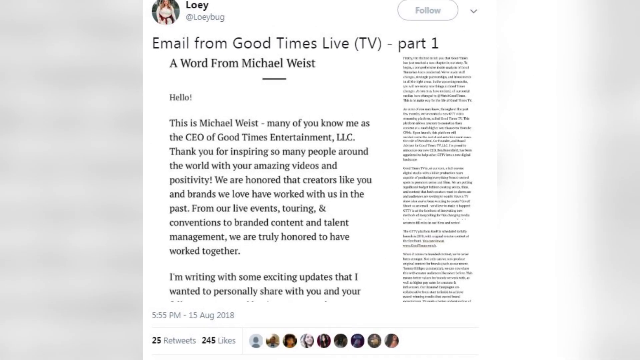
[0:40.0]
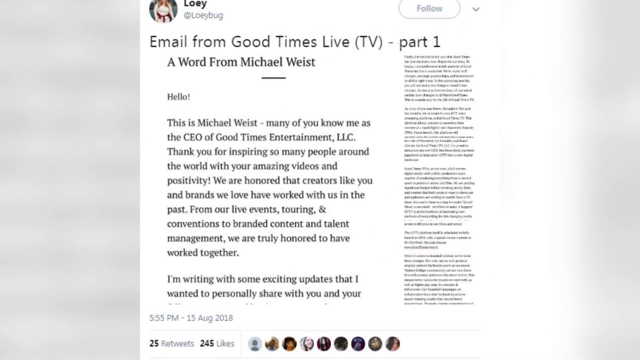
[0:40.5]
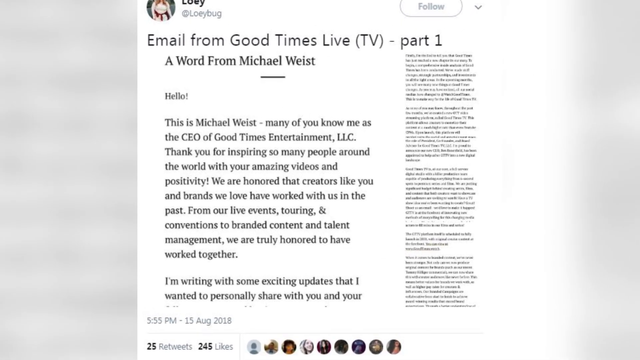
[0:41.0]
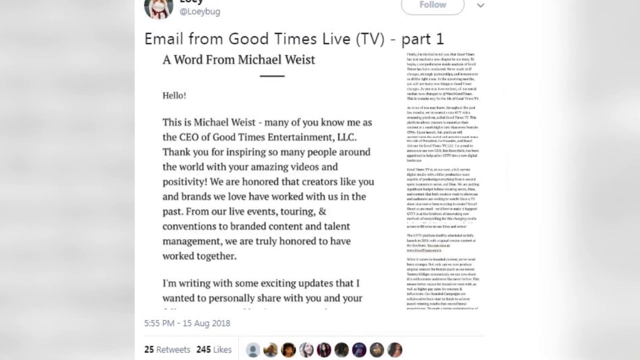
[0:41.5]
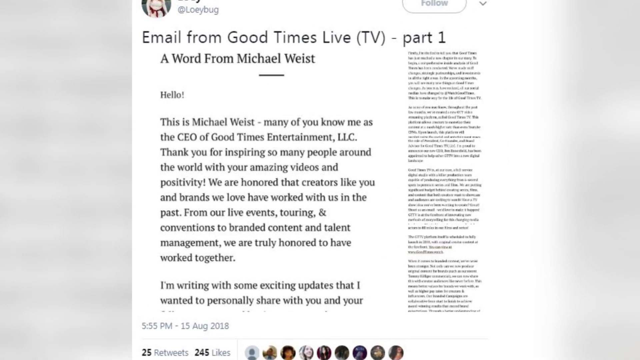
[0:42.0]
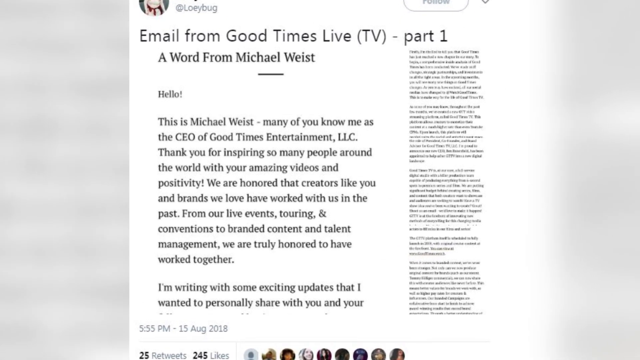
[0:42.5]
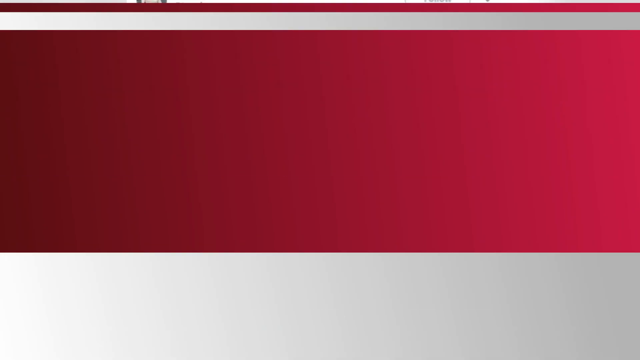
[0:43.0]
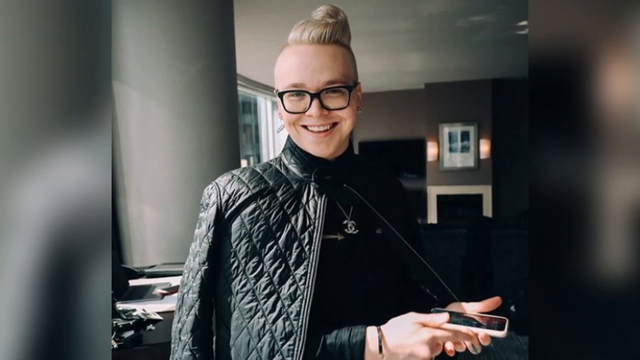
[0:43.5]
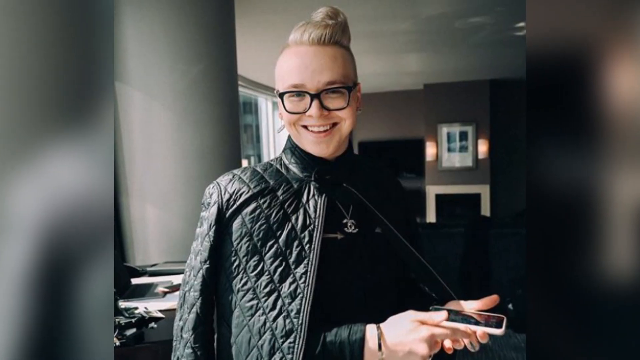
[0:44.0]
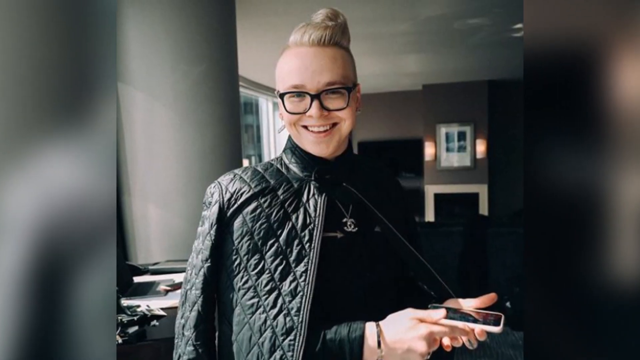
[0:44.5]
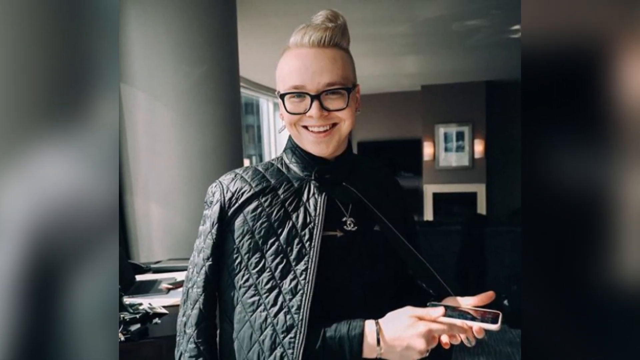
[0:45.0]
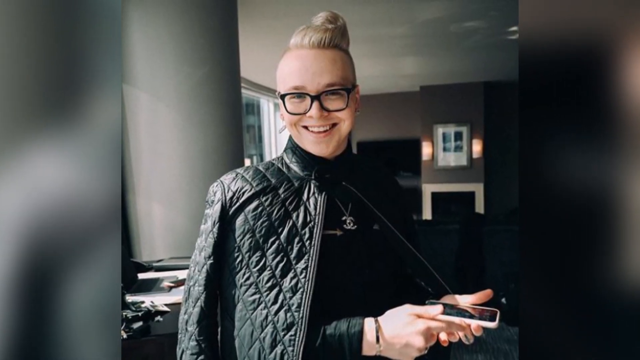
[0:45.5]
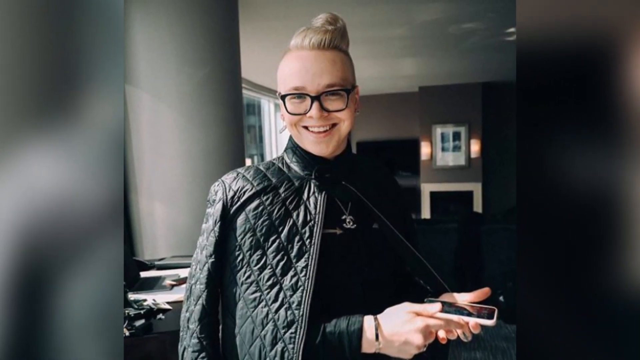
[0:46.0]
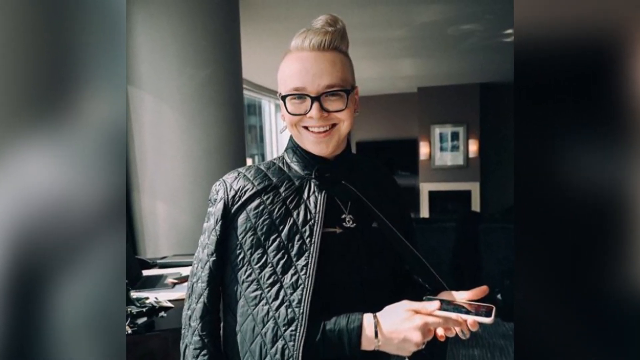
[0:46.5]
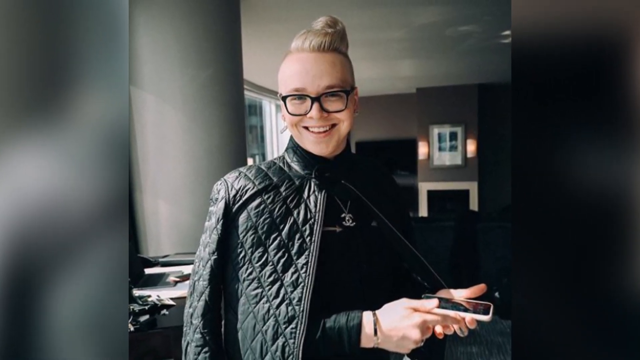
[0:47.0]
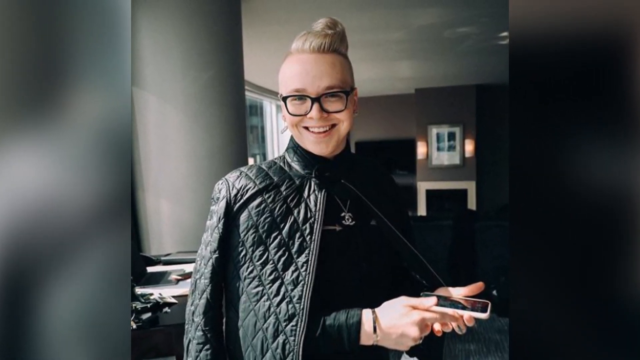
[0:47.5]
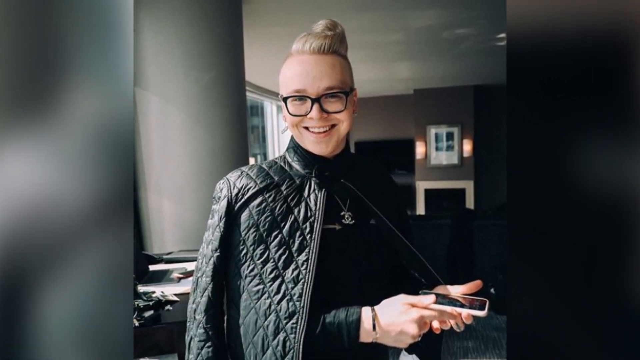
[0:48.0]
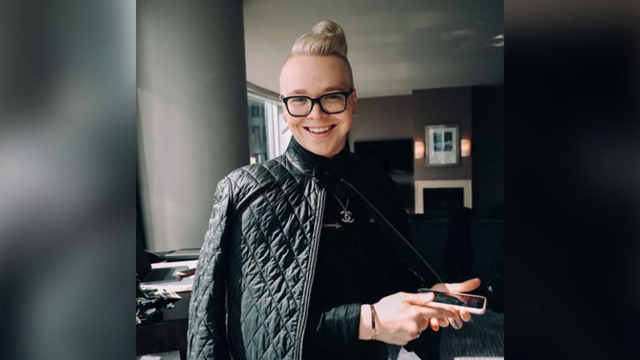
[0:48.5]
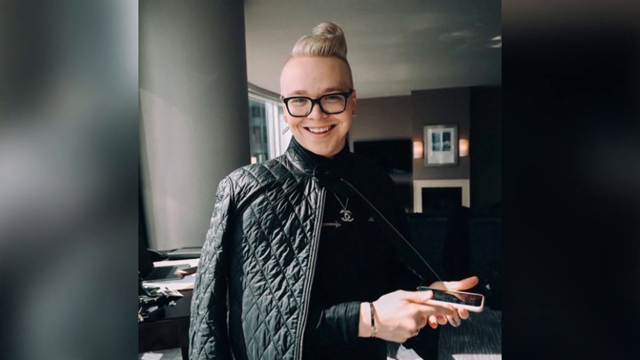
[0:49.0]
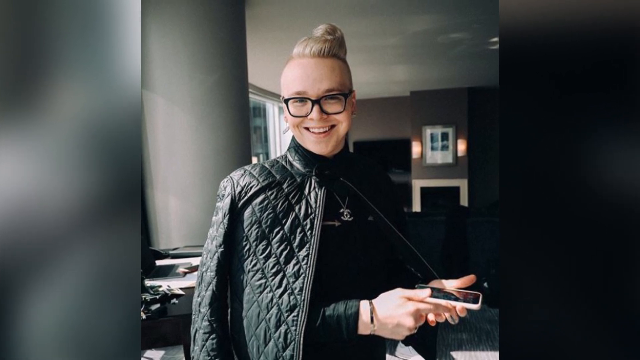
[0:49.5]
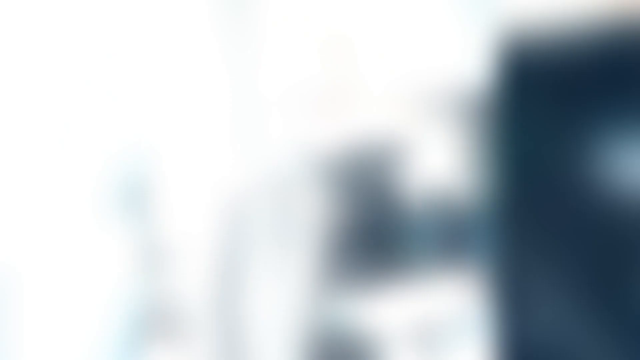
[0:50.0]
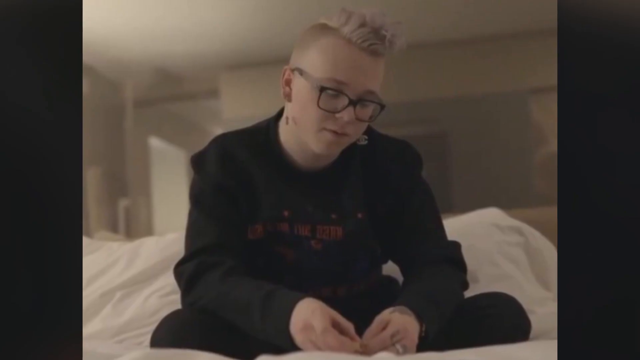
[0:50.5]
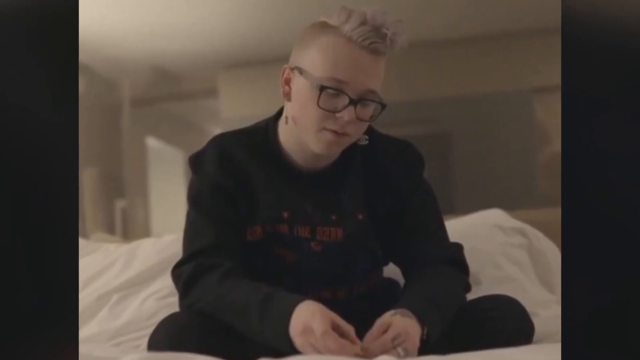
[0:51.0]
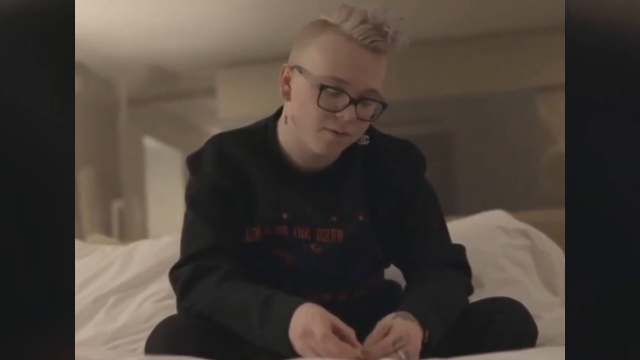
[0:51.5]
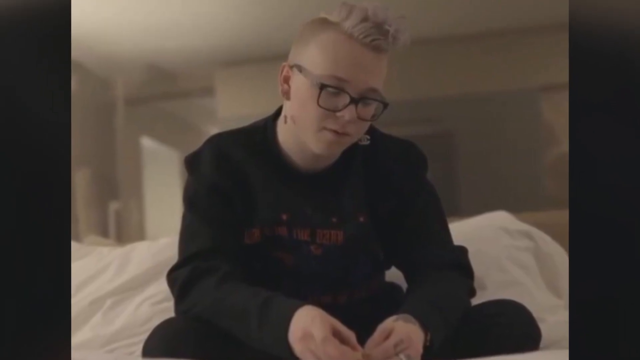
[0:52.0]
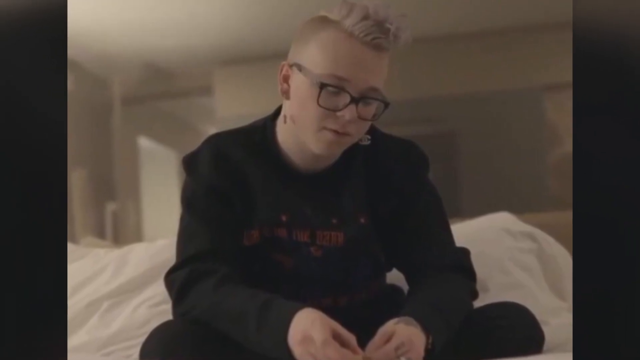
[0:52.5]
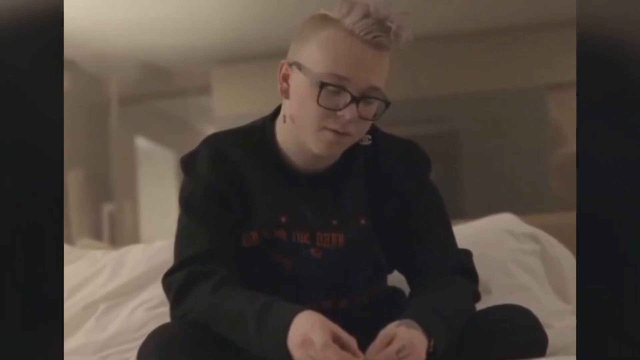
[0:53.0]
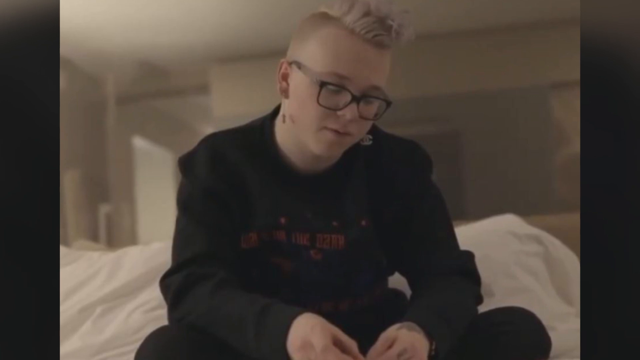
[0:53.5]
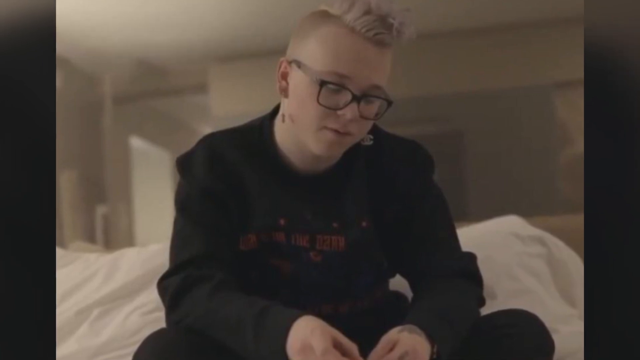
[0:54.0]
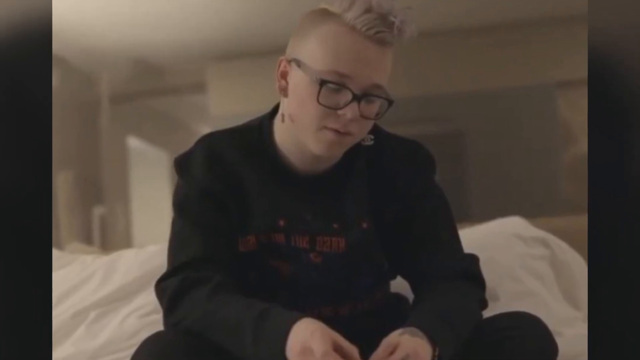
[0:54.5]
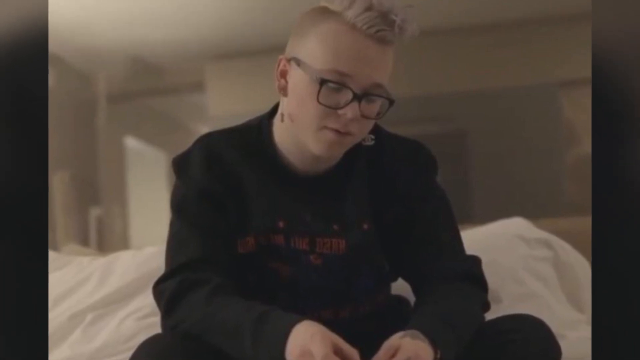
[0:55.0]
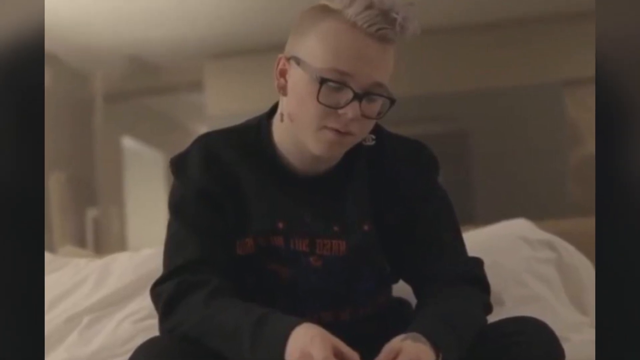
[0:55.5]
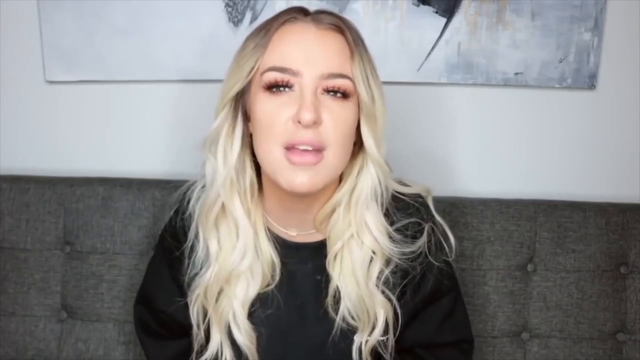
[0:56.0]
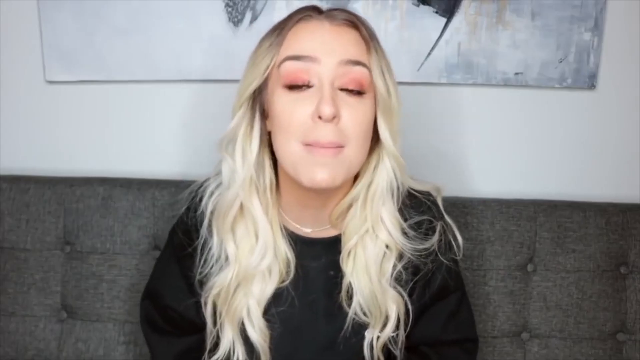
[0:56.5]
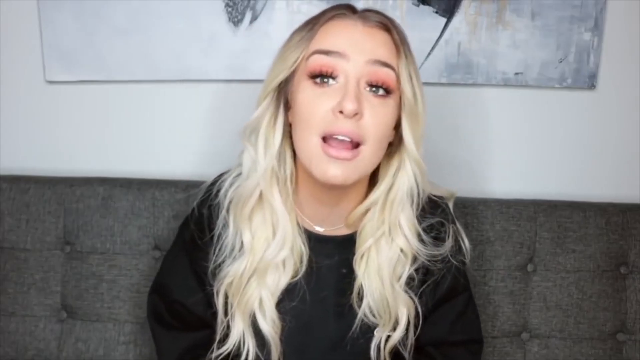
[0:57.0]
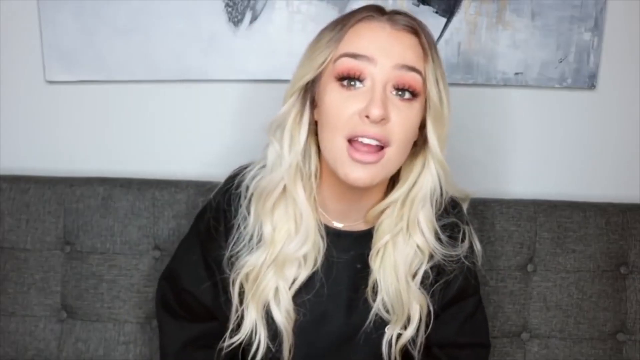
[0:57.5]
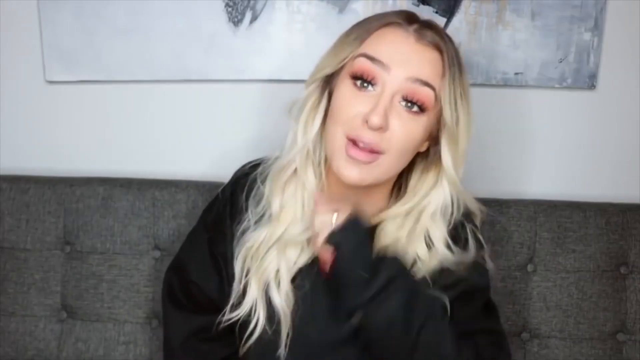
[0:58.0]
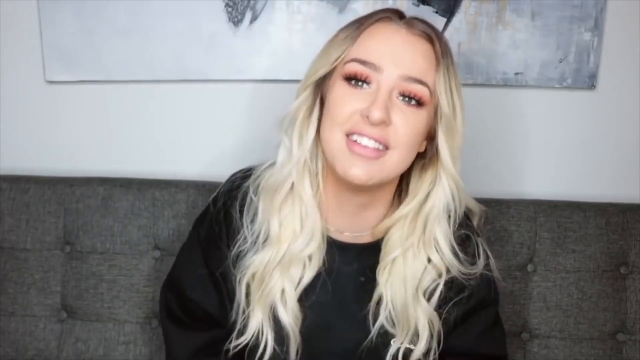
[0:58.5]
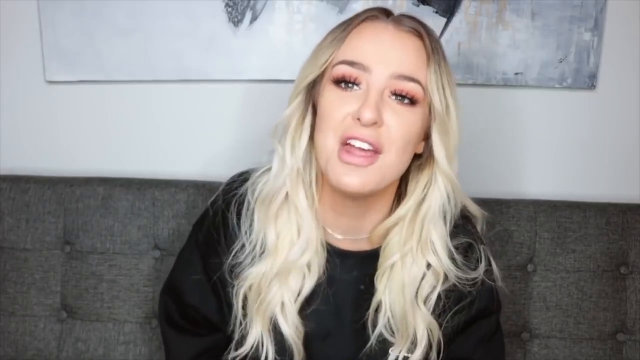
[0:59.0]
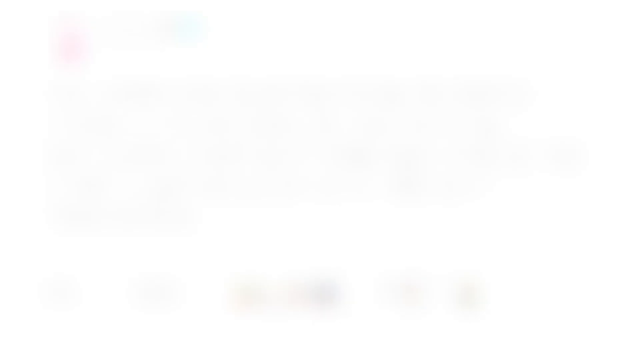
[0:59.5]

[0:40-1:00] A transition, a quick flurry of red and white stripes sweeping across the screen, brings in a new graphic: the man with the white-blonde mohawk, this time with it pulled up kind of in a bun on top of his head. He wears an open black puffy jacket with black underneath, holds his phone, and smiles at the camera. Another view shows him looking like he is sitting on a bed or couch with white cushions, looking down, maybe at a phone, still in the black-framed glasses and an all-black long-sleeve shirt, as the camera pans in slowly on him. Then a woman on a couch is talking to the camera. She is Caucasian, with long blonde hair parted in the middle, a long-sleeve black shirt, a thin gold necklace, very pink eye shadow and fake lashes. She sits on a dark gray tufted couch, and the bottom of a gray painting is visible in the background. The video then appears to switch to a tweet.